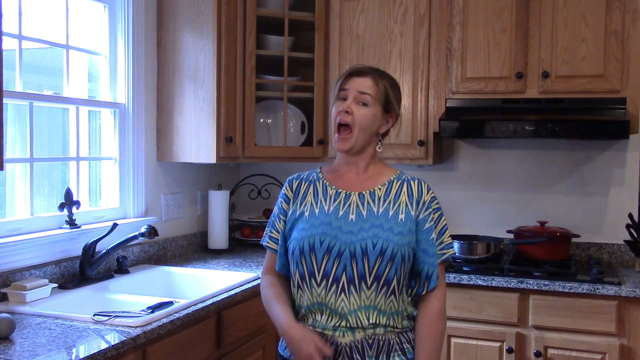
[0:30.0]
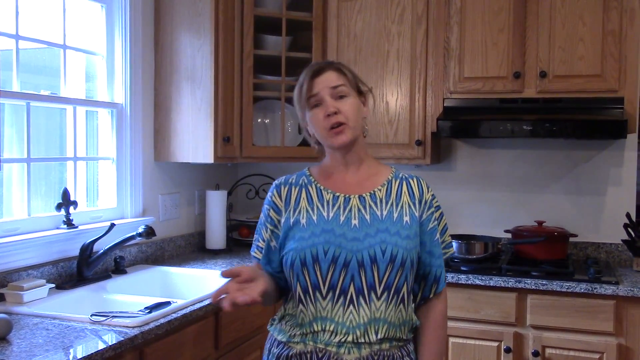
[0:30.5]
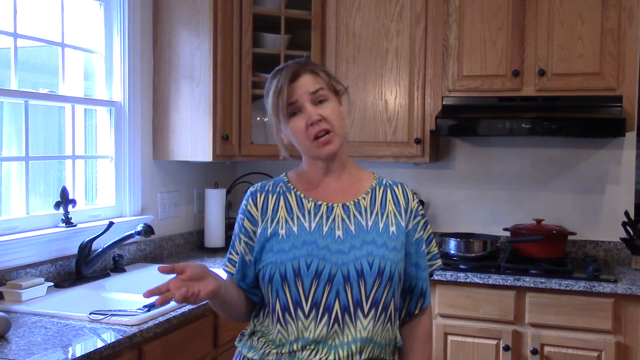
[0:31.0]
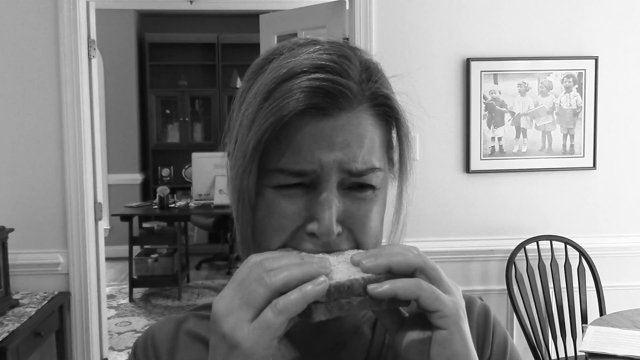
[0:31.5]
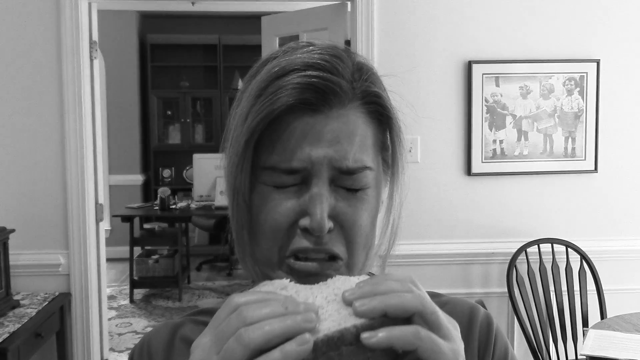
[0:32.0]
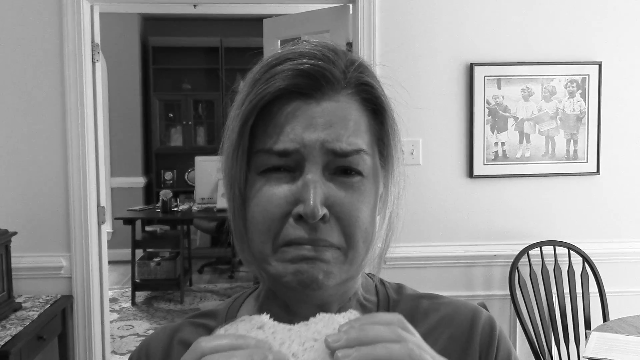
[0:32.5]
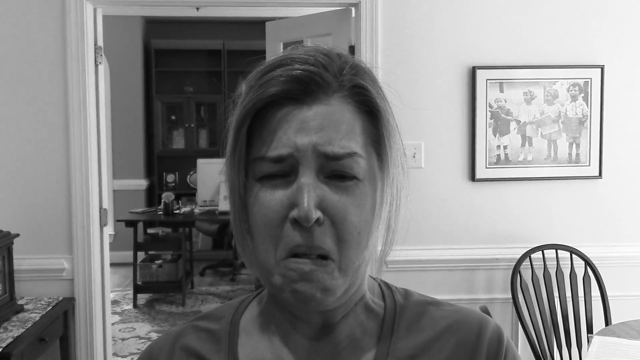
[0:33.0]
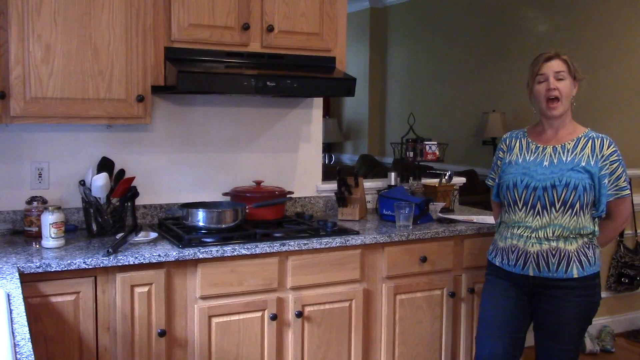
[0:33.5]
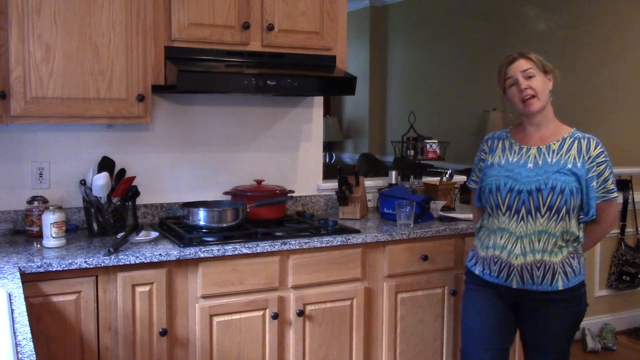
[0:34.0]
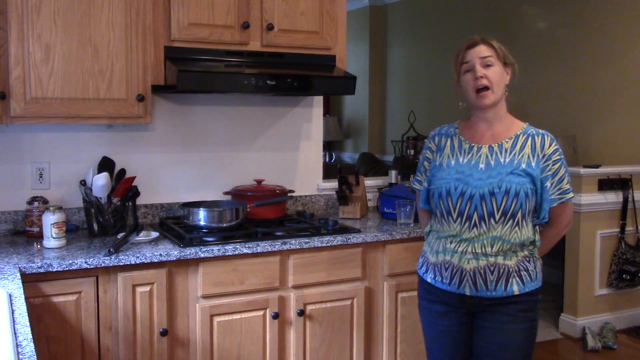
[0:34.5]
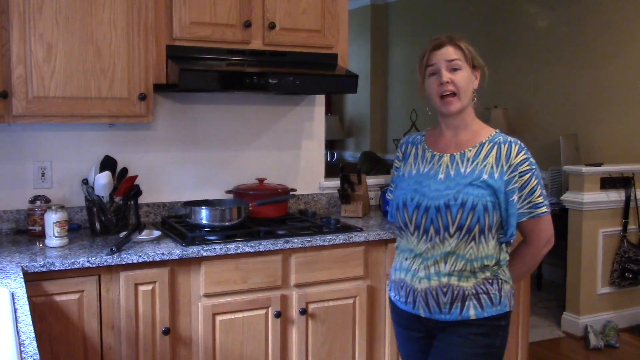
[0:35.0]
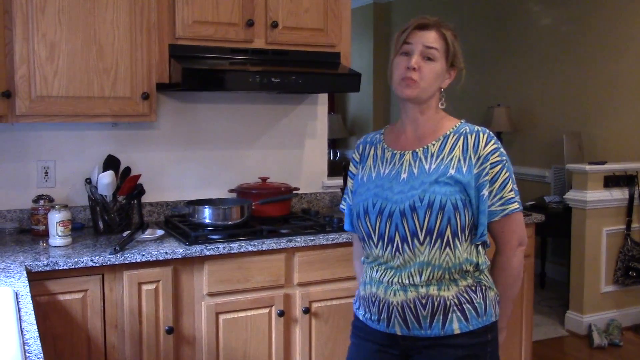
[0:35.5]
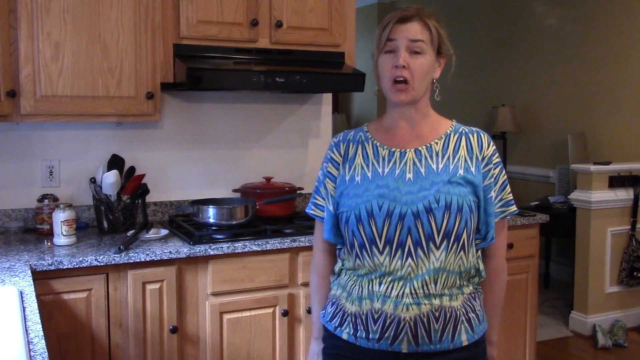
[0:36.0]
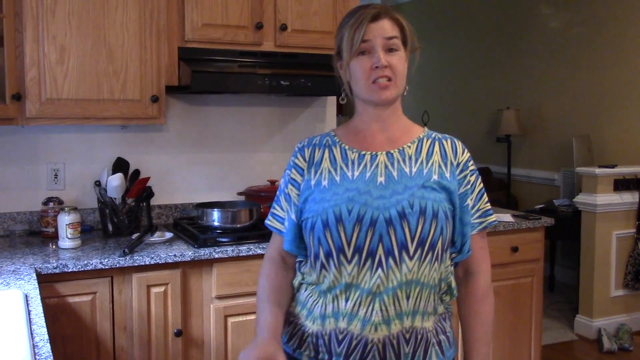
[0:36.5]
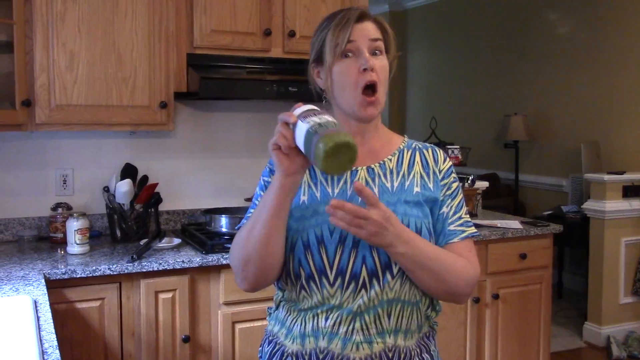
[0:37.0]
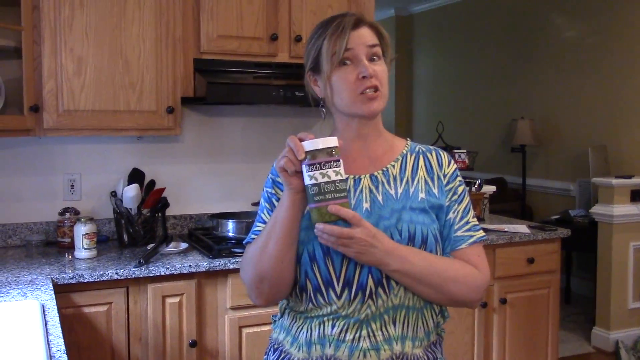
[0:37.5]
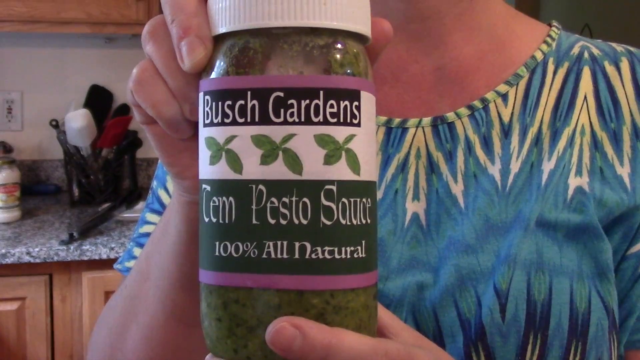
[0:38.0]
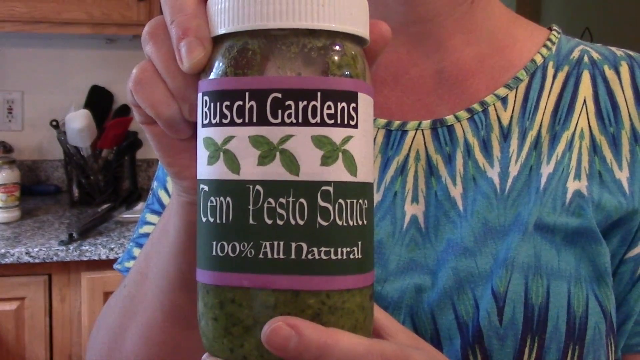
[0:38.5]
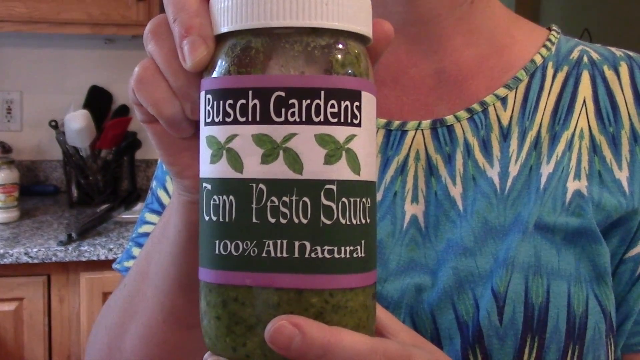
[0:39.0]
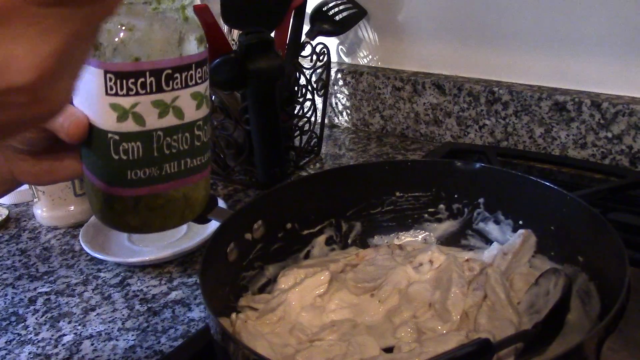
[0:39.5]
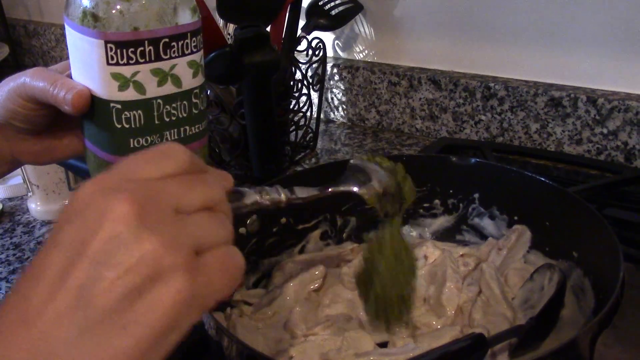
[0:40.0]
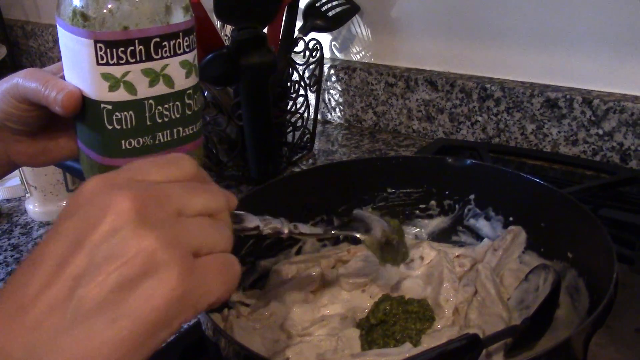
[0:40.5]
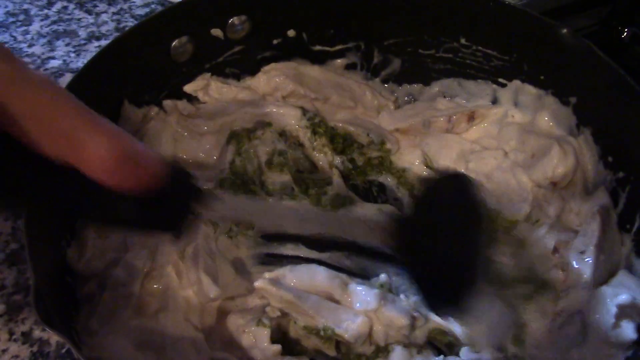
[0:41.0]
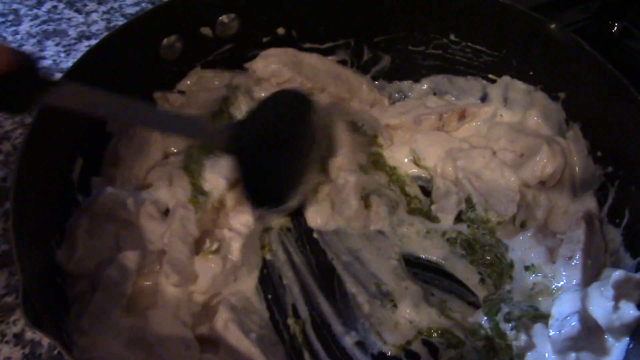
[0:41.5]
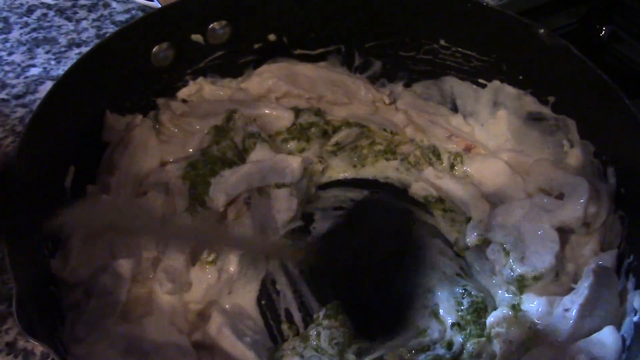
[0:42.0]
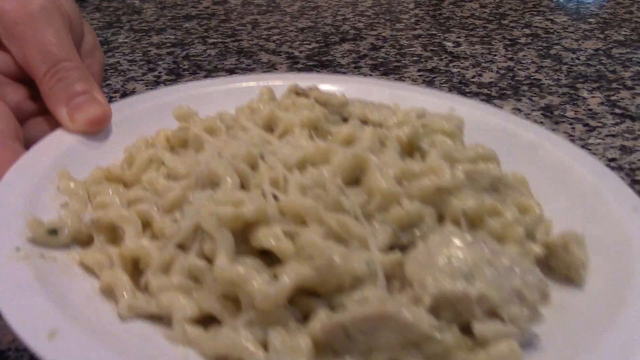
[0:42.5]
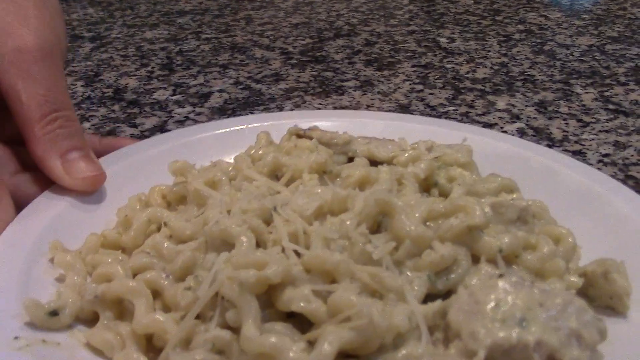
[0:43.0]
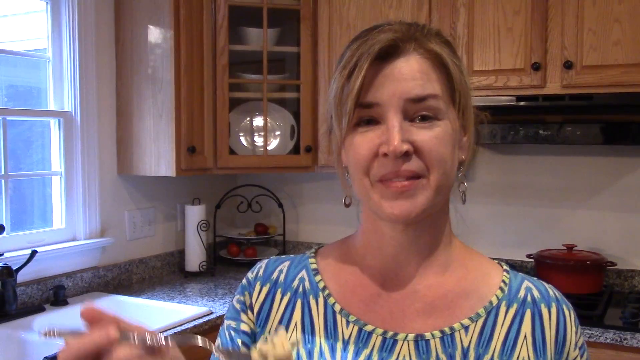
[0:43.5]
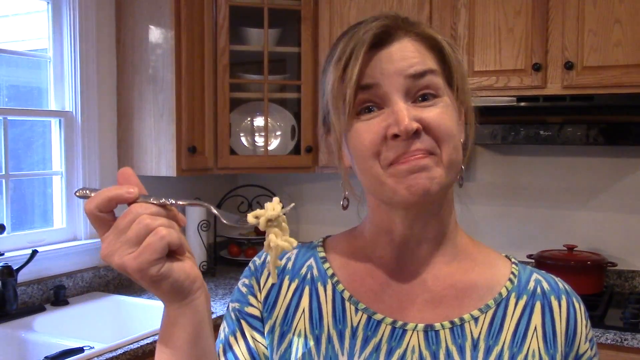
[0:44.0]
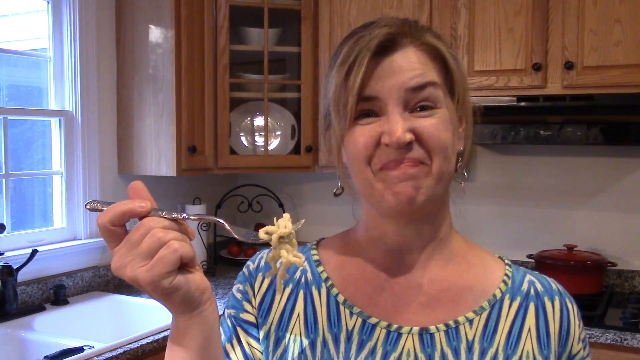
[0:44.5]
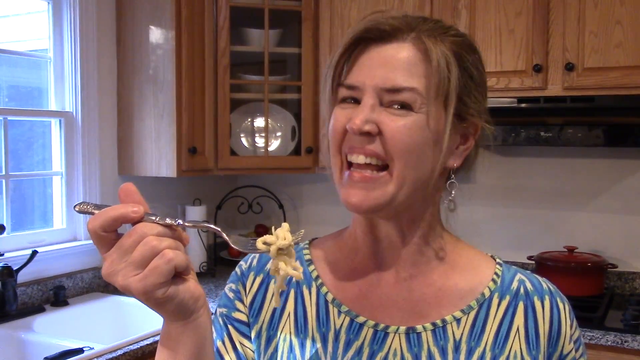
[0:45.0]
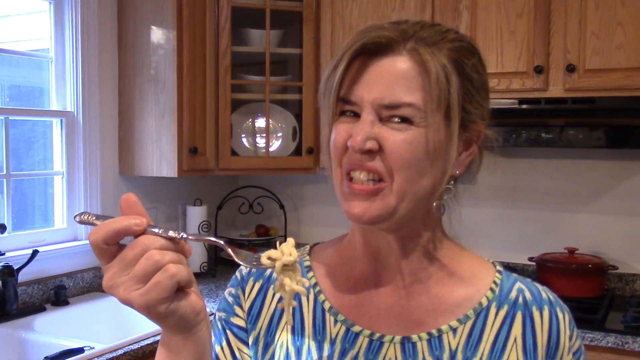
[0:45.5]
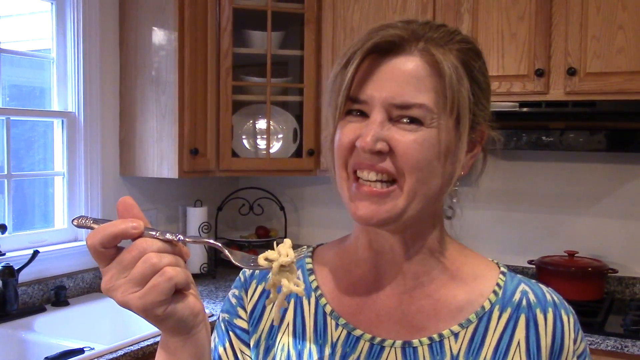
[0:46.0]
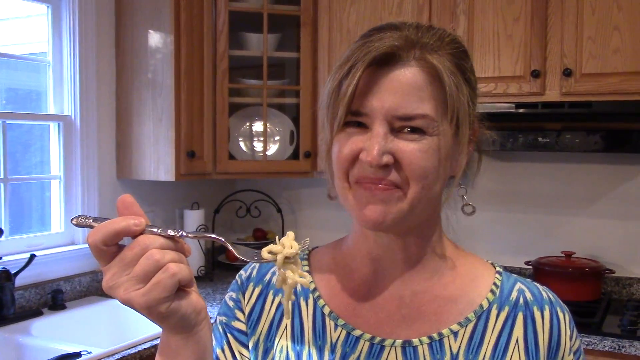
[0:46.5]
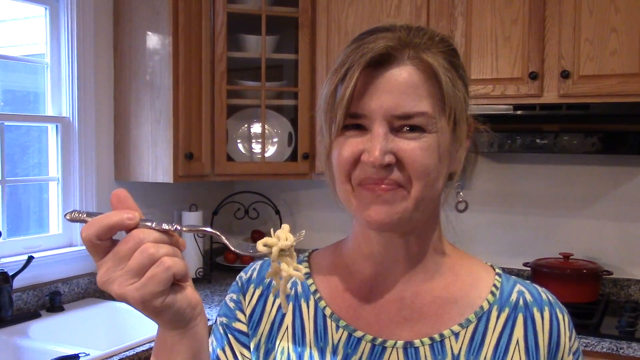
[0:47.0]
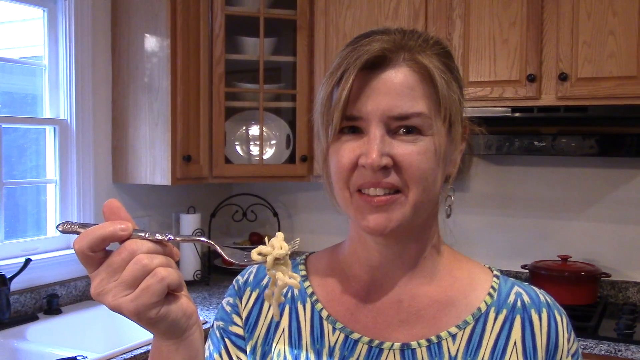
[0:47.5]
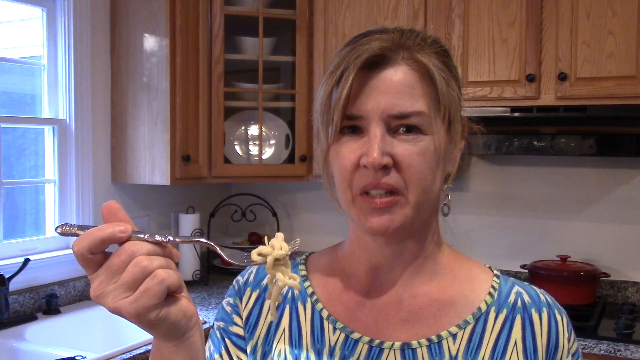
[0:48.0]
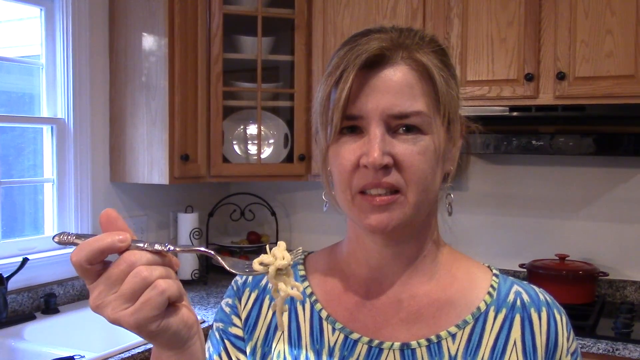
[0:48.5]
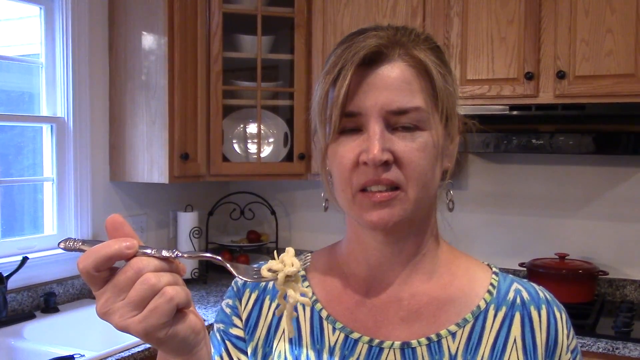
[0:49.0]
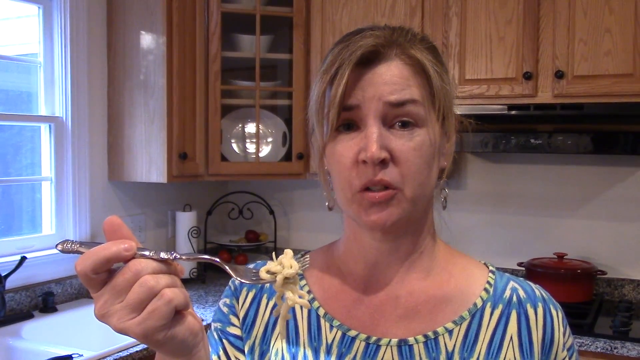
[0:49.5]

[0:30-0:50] The woman in the blue patterned top, a middle-aged white woman with medium-length blonde hair, keeps talking to the camera in her kitchen, using her arms to kind of support what she is saying. The video cuts to a black-and-white close-up of the same woman taking a bite of a sandwich with a very disgusted look on her face. This scene appears to be in a slightly different part of her home: what looks like the kitchen is in the background in another room, and in the room where she is sitting there is part of a table and a chair, plus a picture frame in the background. The scene cuts back to the woman in her kitchen, in color, standing in front of the stove area with her arms behind her back. She walks toward the camera talking and holds up a clear jar of pesto sauce. A close-up shows it is pesto sauce from Busch Gardens, referencing the amusement park; the label reads "Tem pesto sauce 100% all natural." She then takes a scoop out of the jar with a spoon, puts it into a pan of white pasta, and mixes it around. She places the plate of white pasta on the counter. In a close-up, she holds a forkful of the pasta and is about to eat it, but she is talking and makes kind of a confused face.